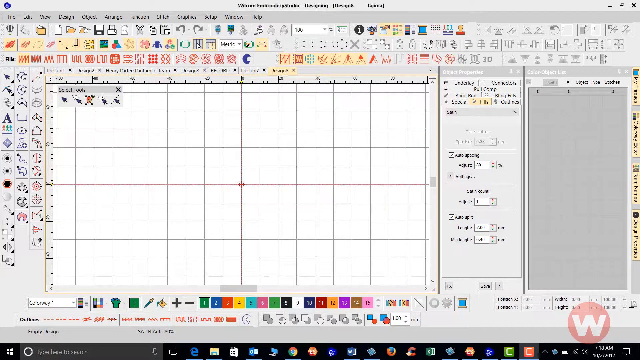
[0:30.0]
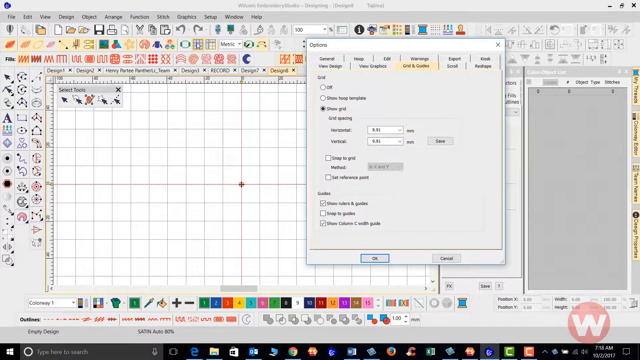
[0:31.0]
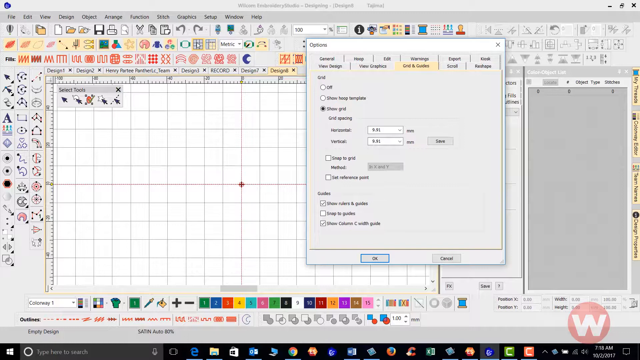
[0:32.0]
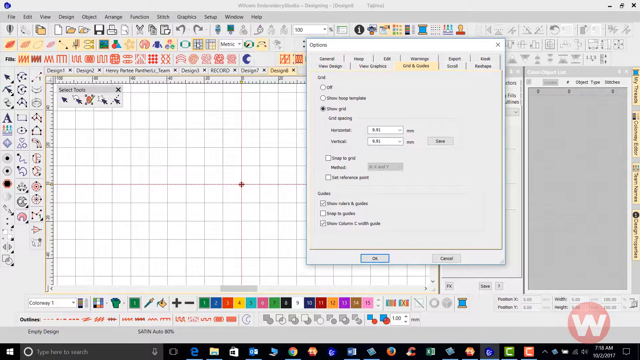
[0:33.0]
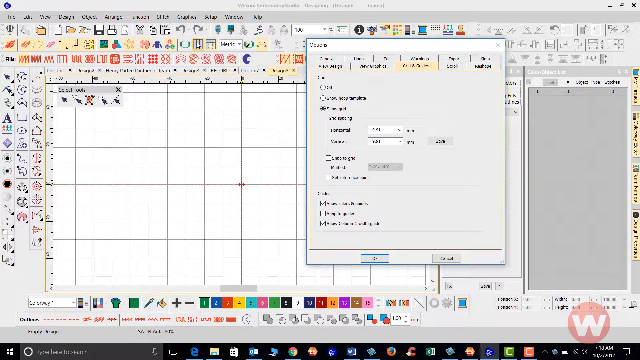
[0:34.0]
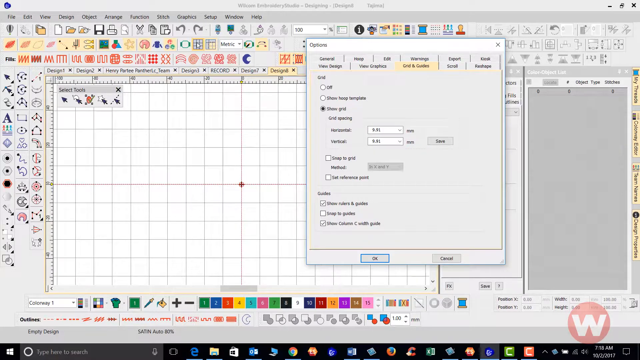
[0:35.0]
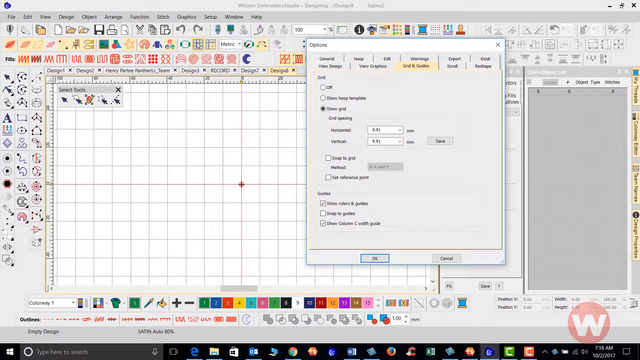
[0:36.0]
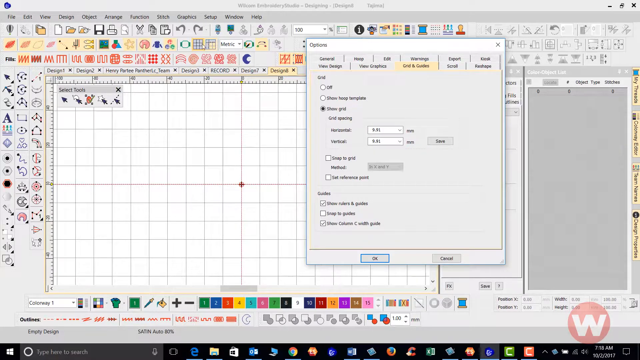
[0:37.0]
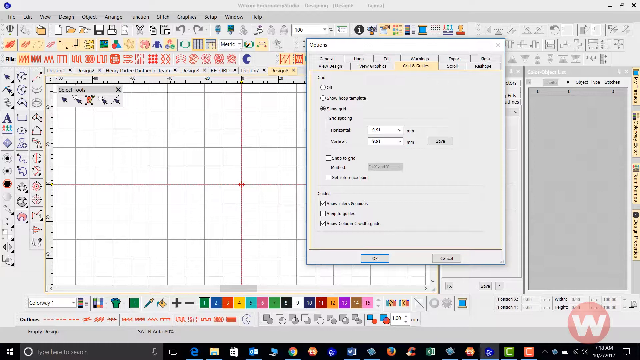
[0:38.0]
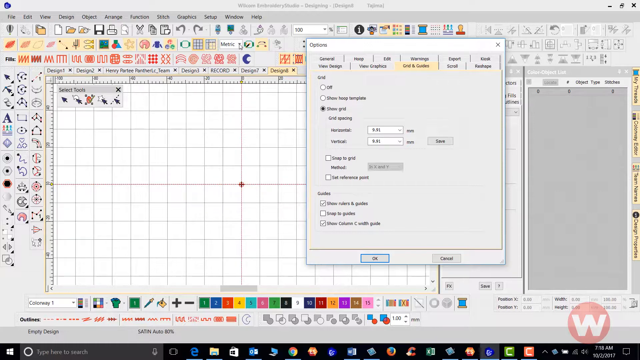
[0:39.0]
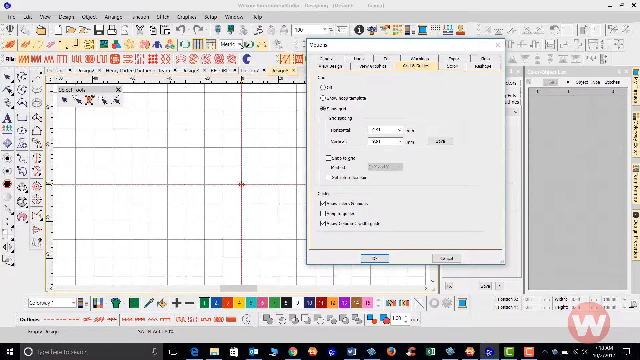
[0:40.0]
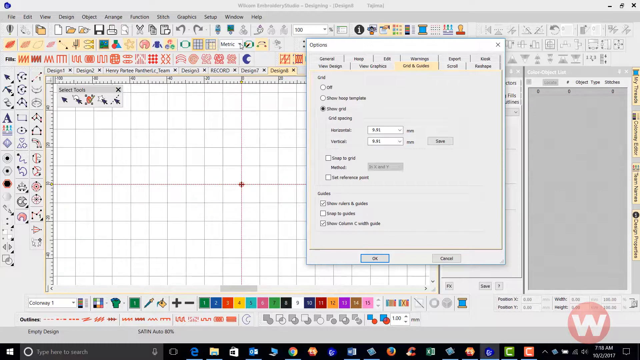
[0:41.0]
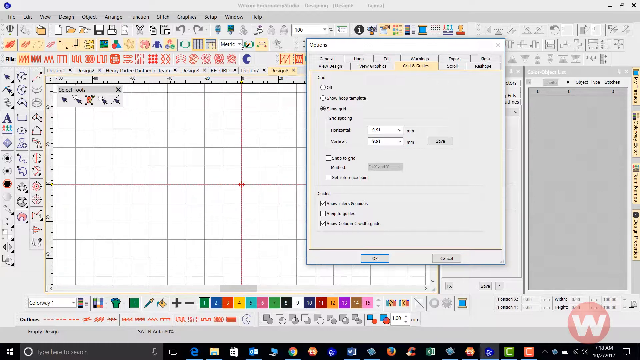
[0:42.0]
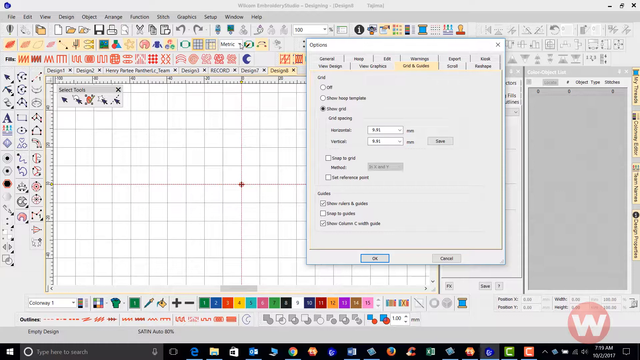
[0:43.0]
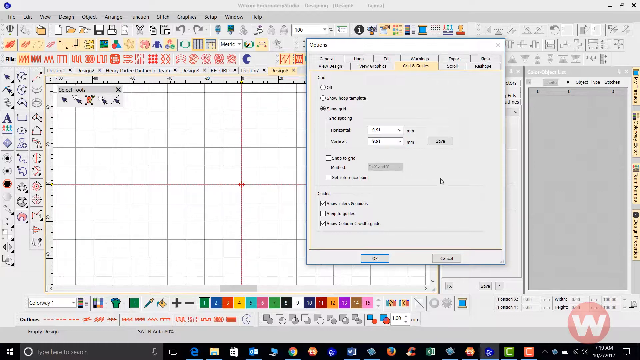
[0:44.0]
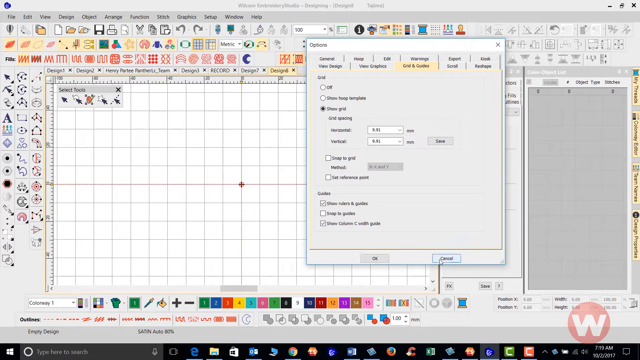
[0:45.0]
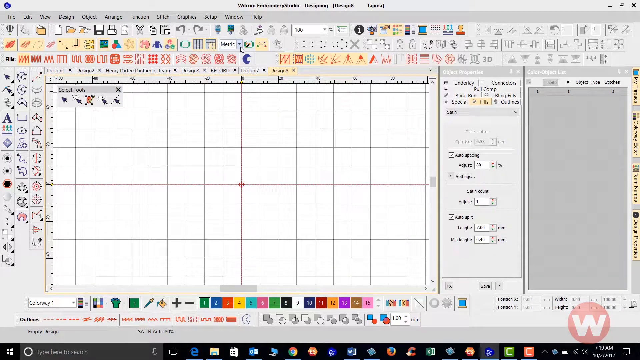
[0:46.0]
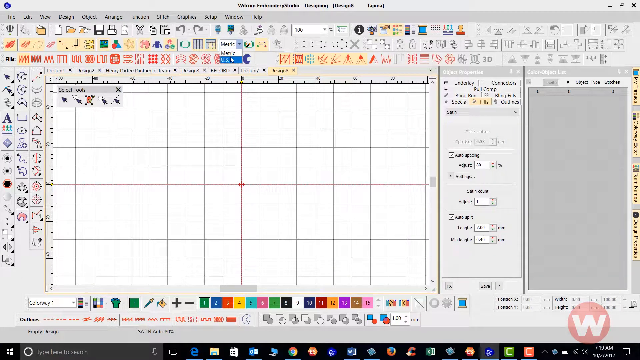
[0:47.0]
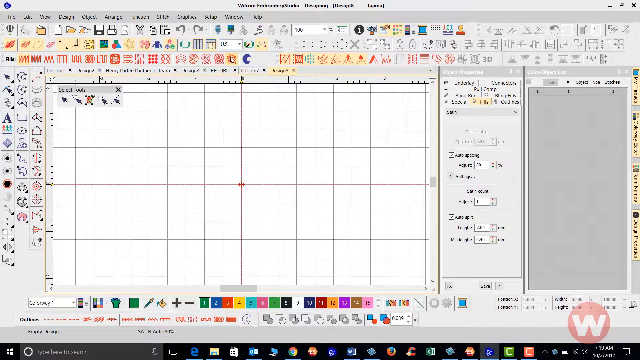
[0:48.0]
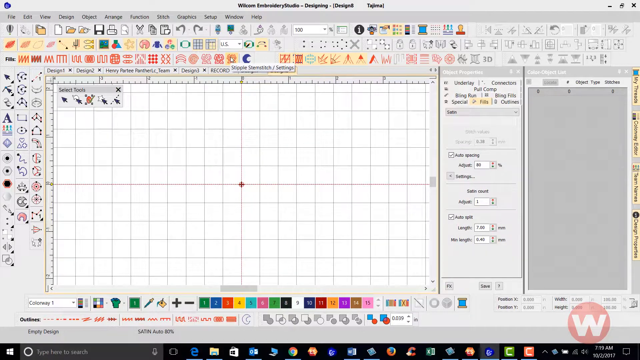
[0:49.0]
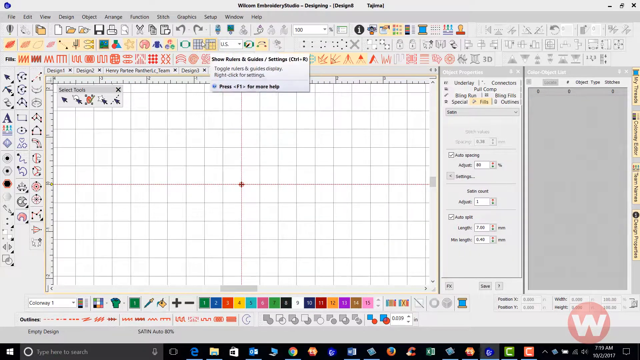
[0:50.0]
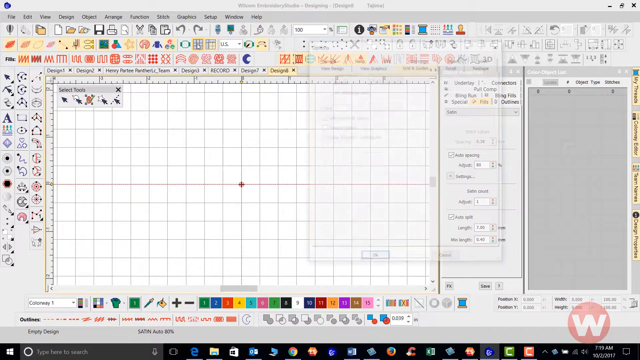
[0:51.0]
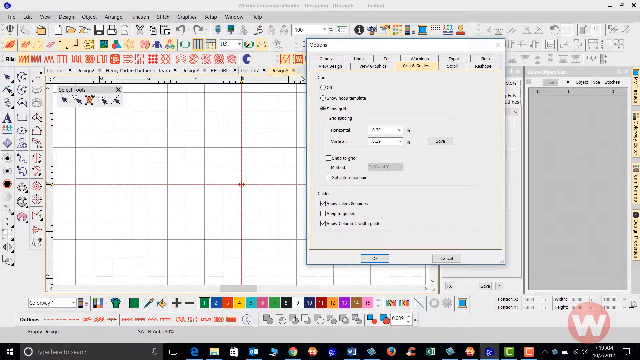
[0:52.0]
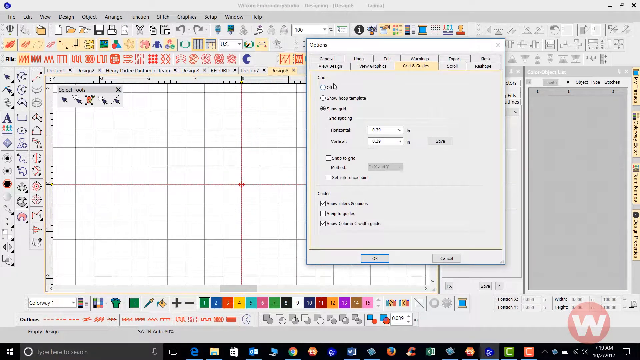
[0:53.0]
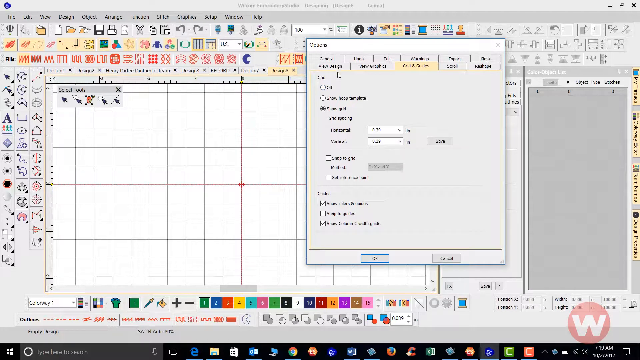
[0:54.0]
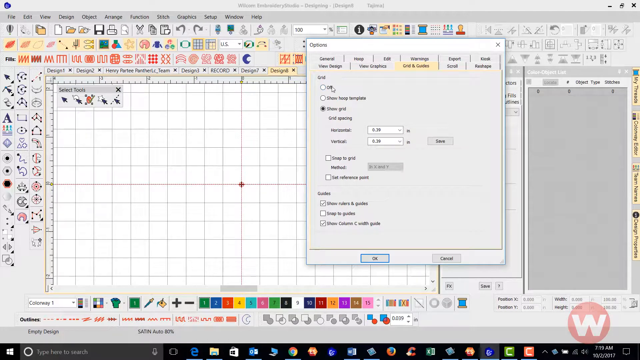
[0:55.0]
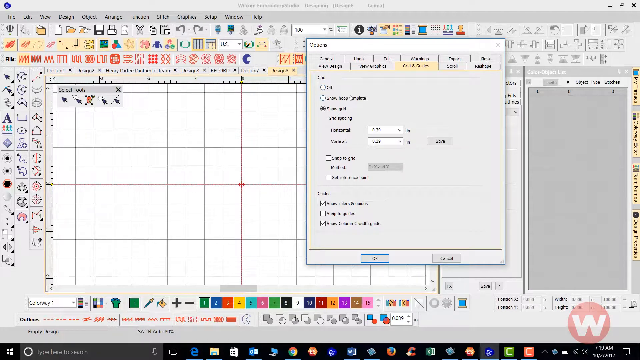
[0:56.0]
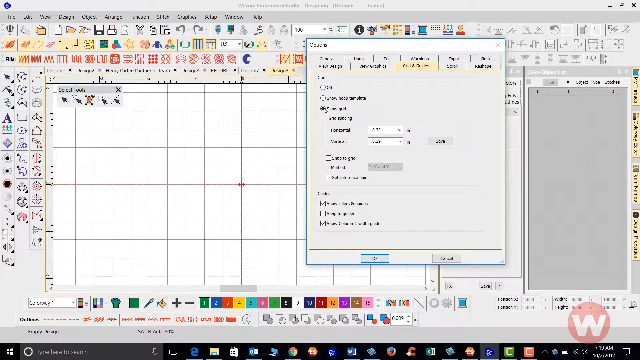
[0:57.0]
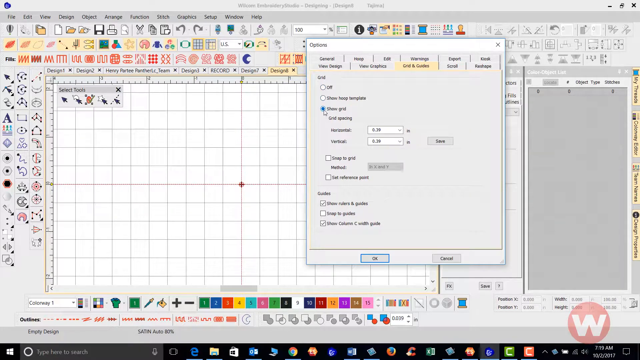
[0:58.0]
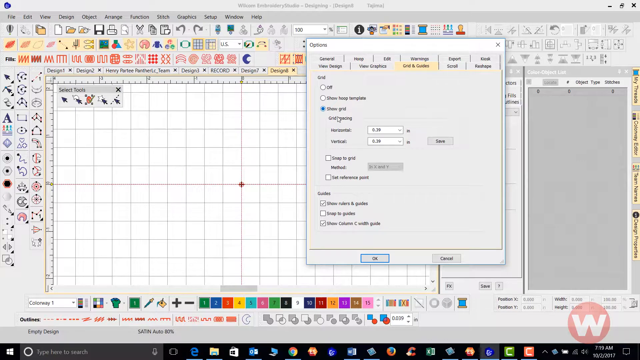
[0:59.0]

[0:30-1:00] A red light appears in the middle as the instructor shows how to add grids and guides; he selects the option to show grids and presses cancel. There is an option to change from metric to US units, and he shows how to turn the grids on or off. He moves the cursor around, then selects cancel, and the small window disappears from the larger screen, revealing the grid screen with its multiple functions. A greyish pad on the side has three zeros on it, where an object type can be added, and it shows the color object list. Various colors along the bottom can be added to the document in the Wilcom America software.